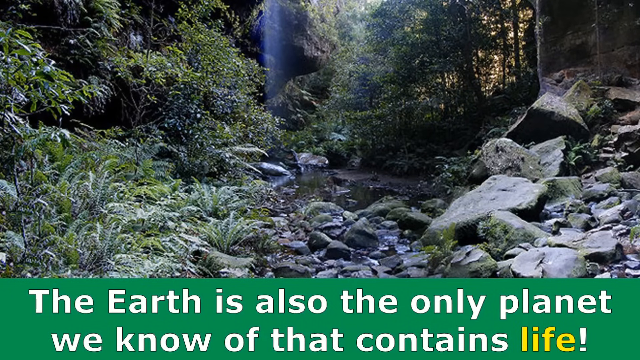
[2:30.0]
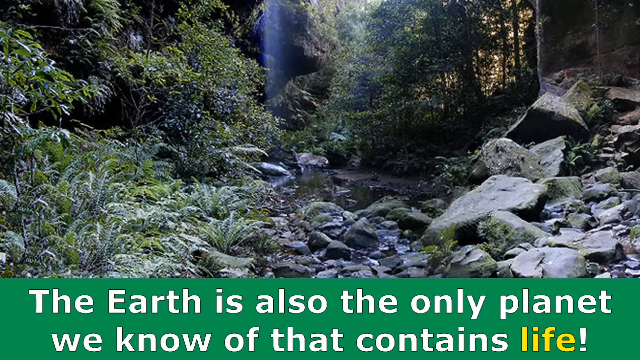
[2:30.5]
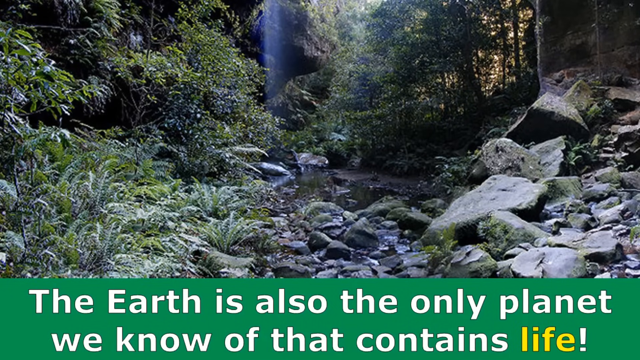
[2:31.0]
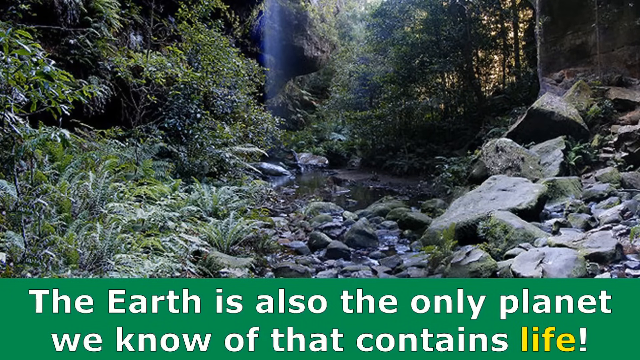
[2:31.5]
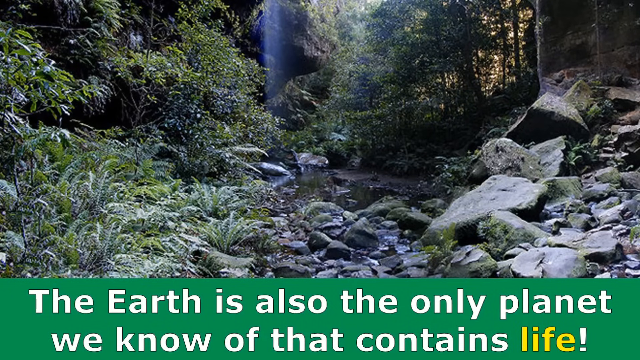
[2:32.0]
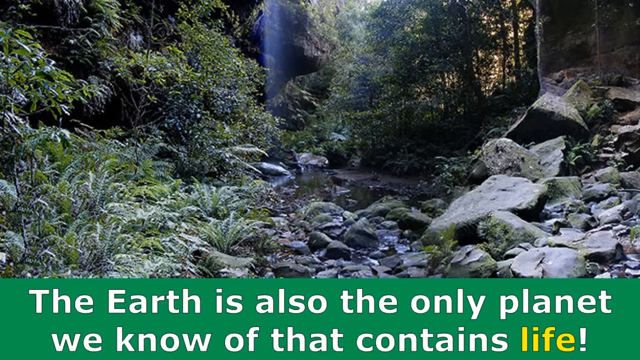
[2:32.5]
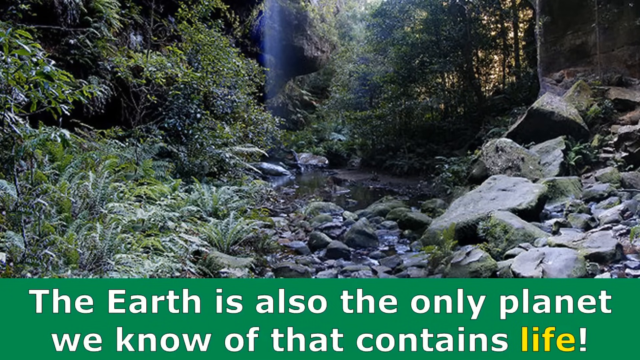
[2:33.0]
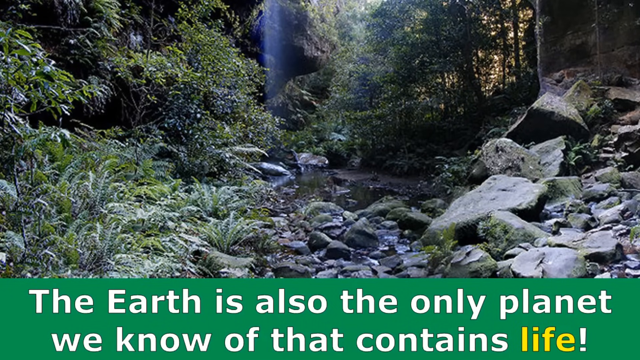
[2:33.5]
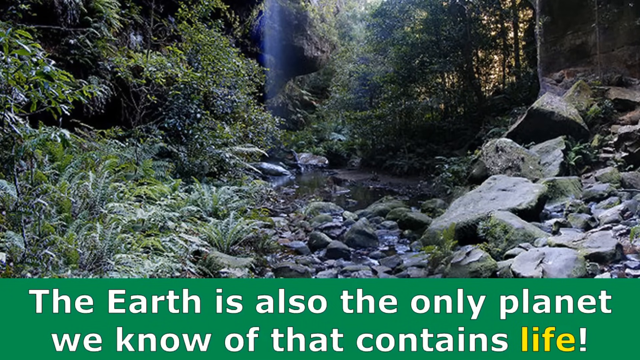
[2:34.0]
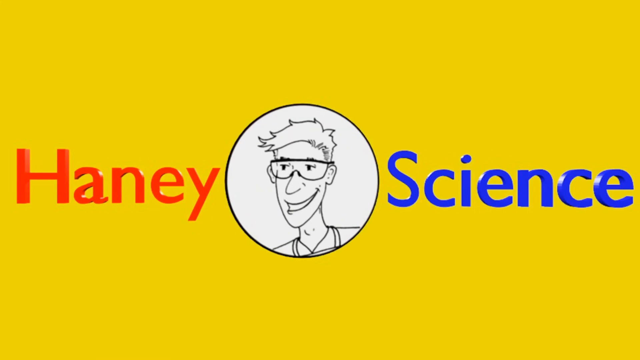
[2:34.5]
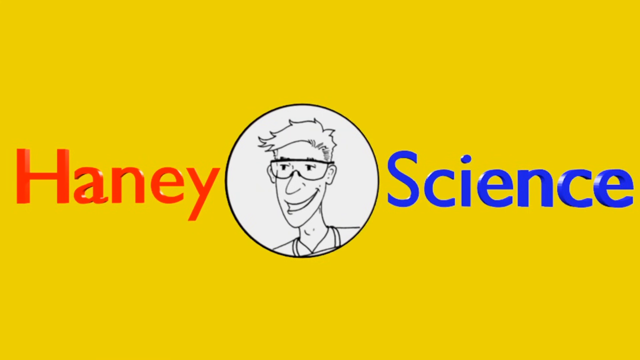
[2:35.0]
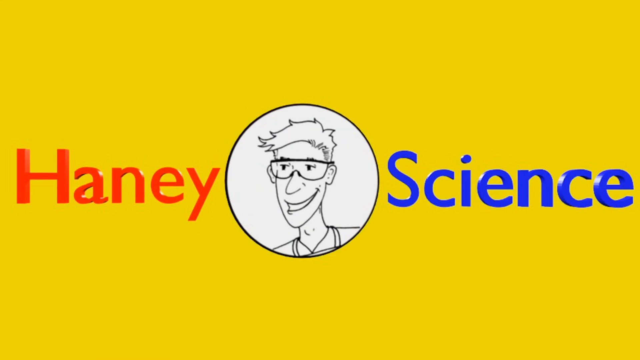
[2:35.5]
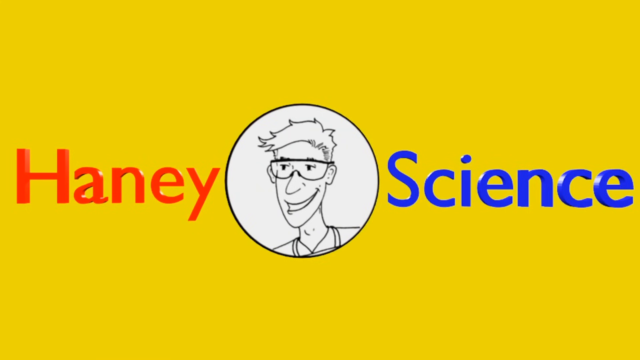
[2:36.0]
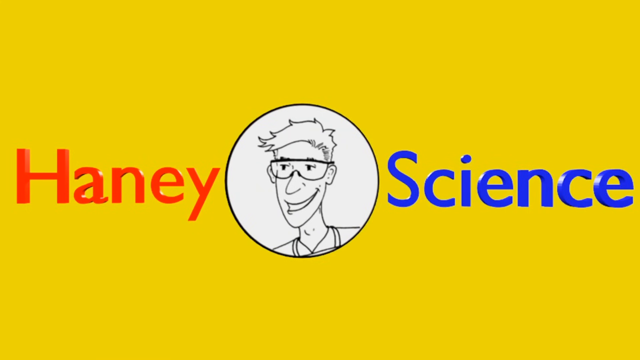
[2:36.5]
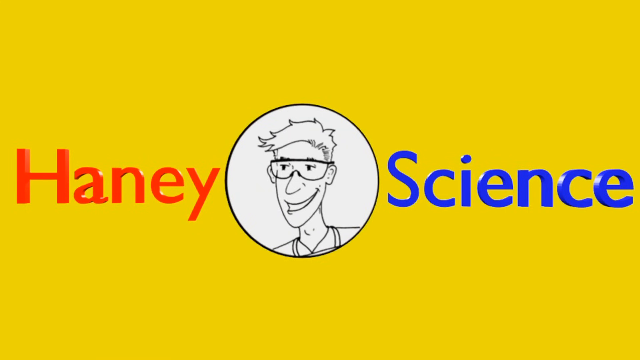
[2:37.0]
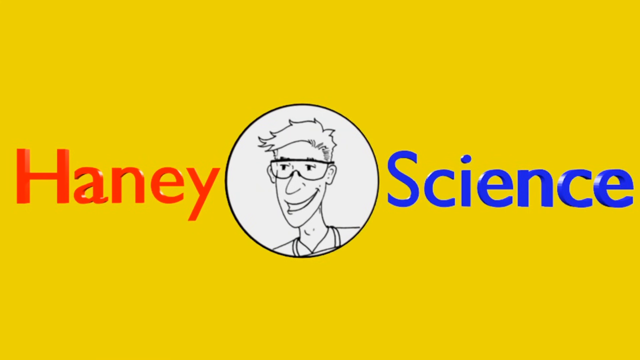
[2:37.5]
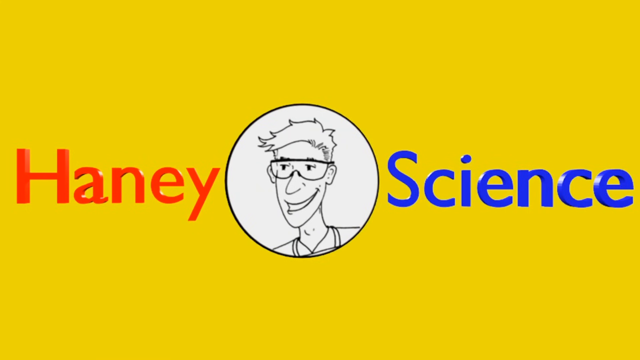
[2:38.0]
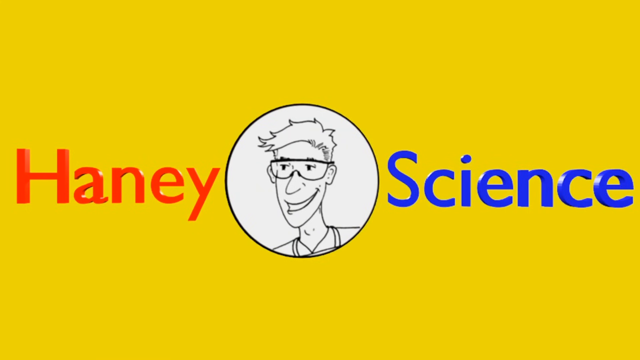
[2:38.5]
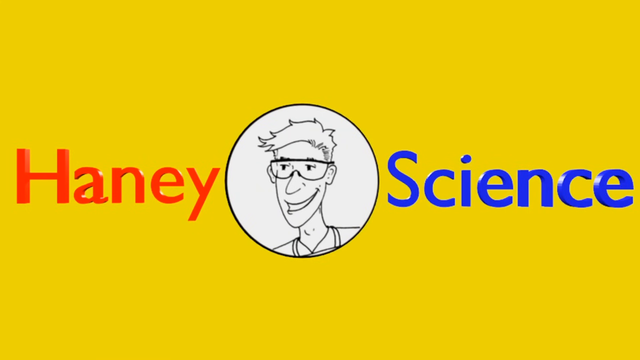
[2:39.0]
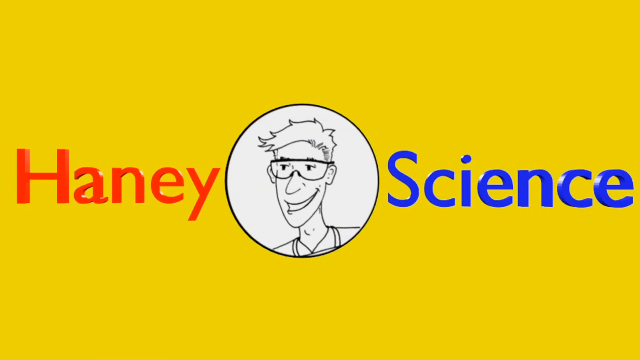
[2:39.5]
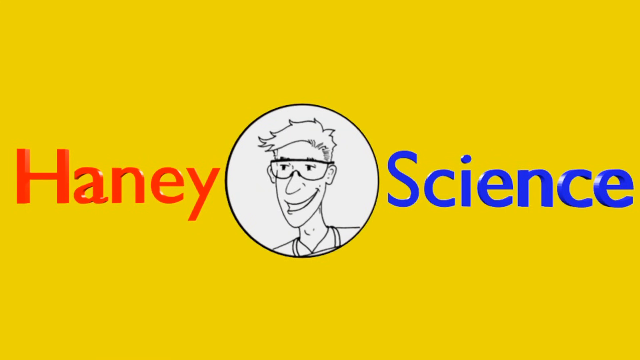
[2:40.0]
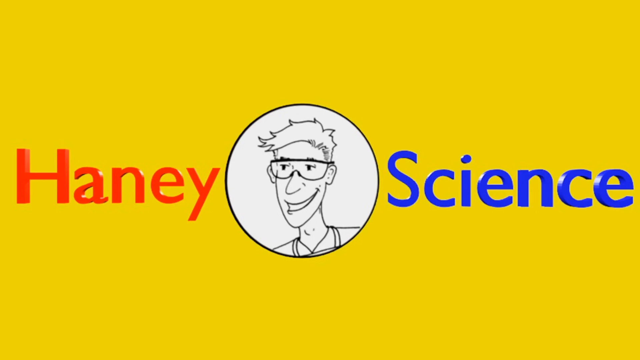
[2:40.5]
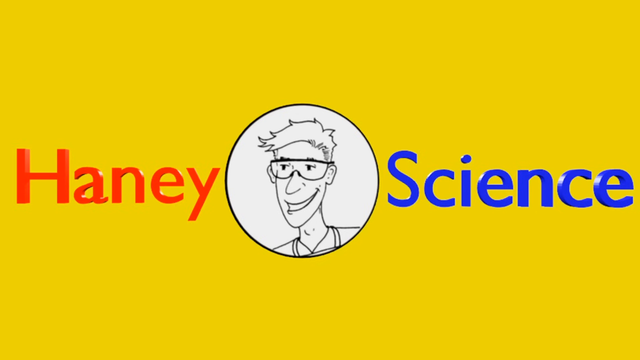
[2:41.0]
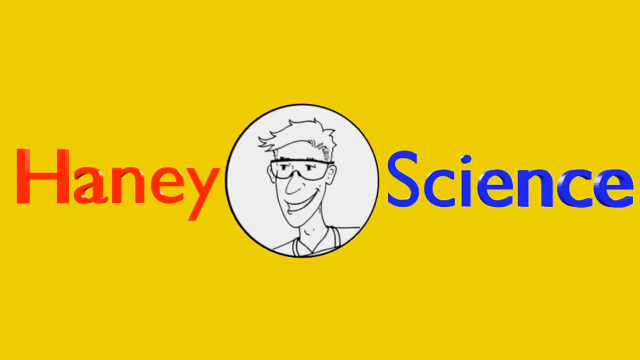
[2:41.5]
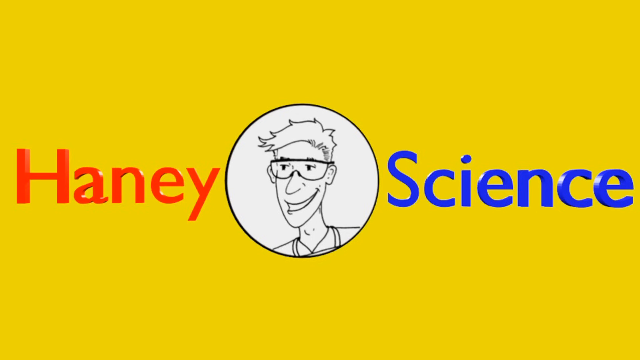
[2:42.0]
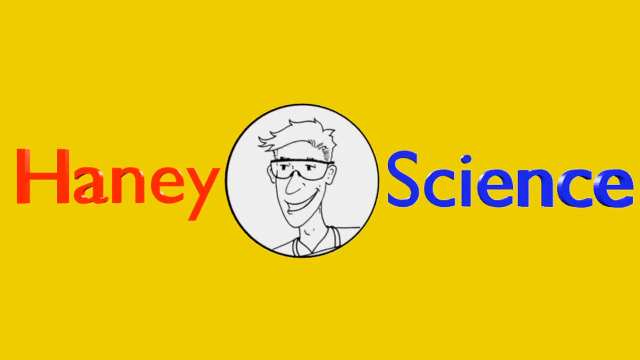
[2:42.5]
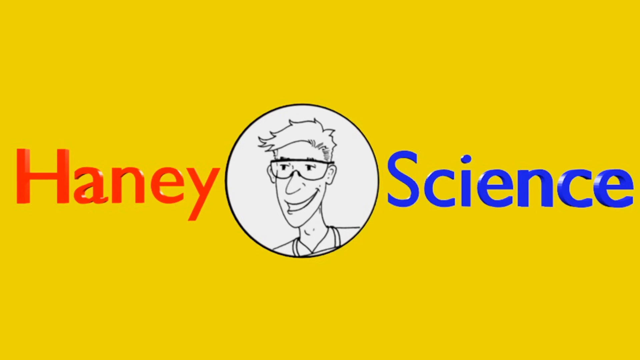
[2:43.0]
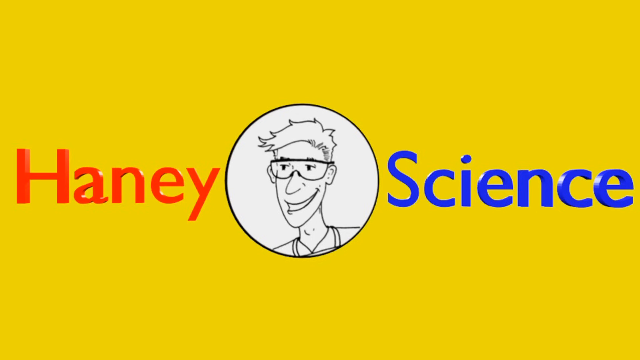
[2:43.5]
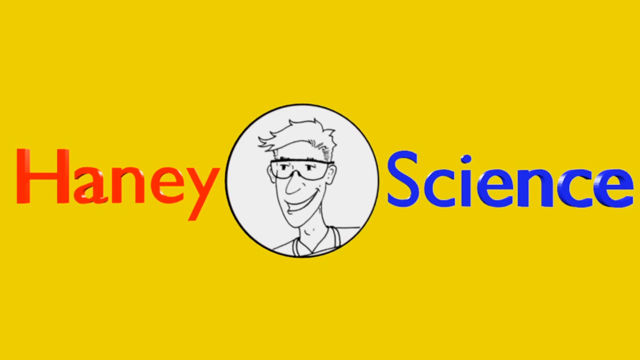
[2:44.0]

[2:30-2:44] The same text on the green horizontal background stays at the bottom over a picture of a forest-type, very natural area, almost like a nature-walk setting. There is a stack of rocks on the right and a stack of plants on the left, and a bit of sky in the background with a sort of sunset look, very orange. The video then cuts to an end screen with the logo of the makers, "Haney Science": just the name, with a picture in the middle of the name of a guy, apparently a scientist, wearing goggles.